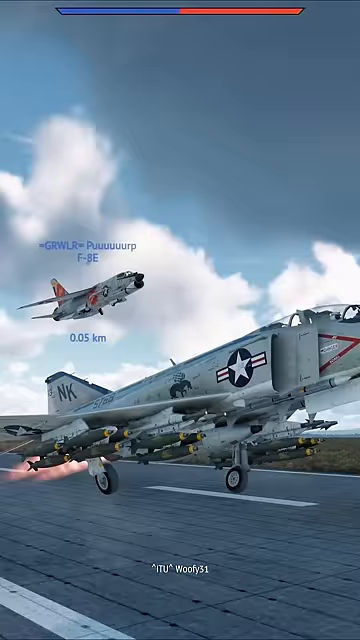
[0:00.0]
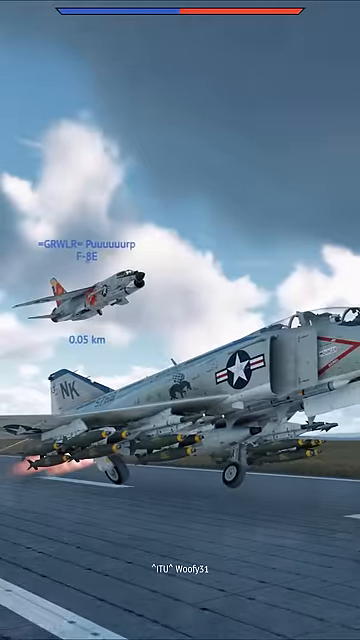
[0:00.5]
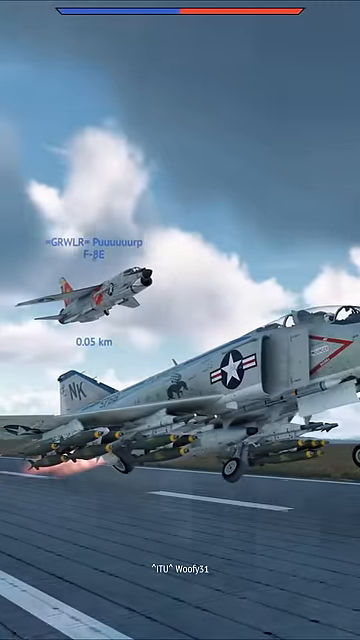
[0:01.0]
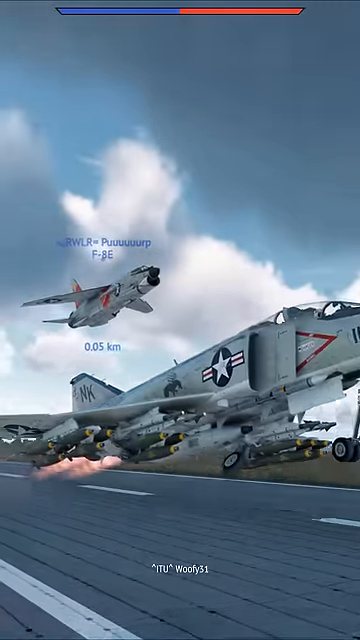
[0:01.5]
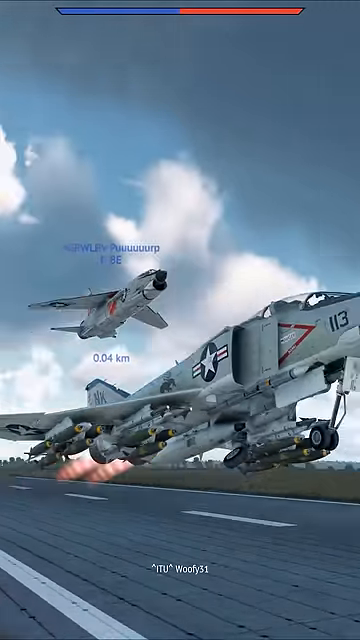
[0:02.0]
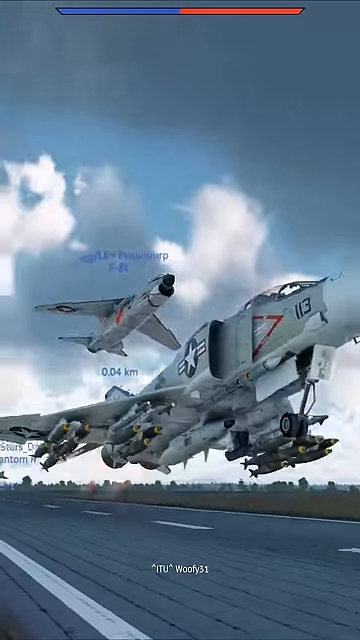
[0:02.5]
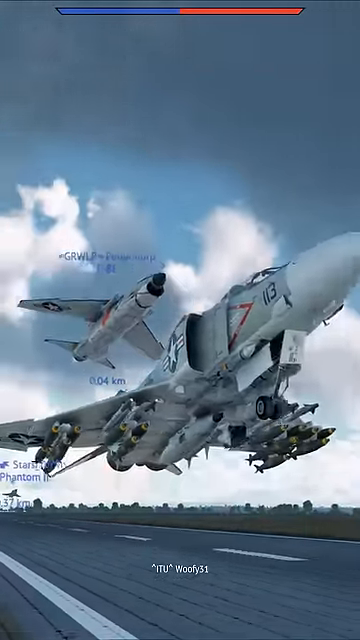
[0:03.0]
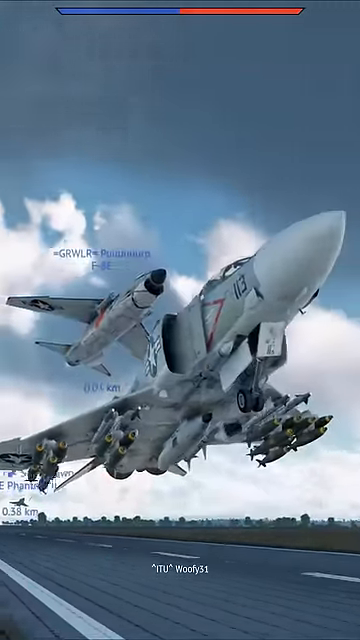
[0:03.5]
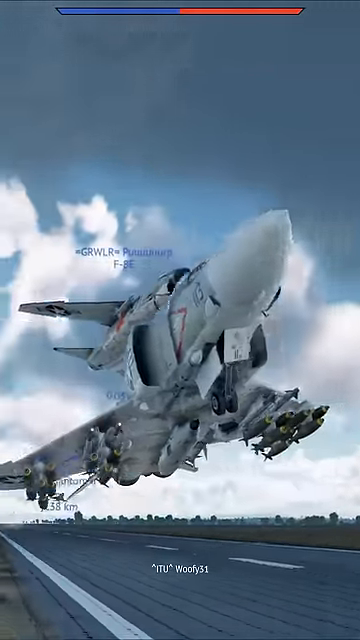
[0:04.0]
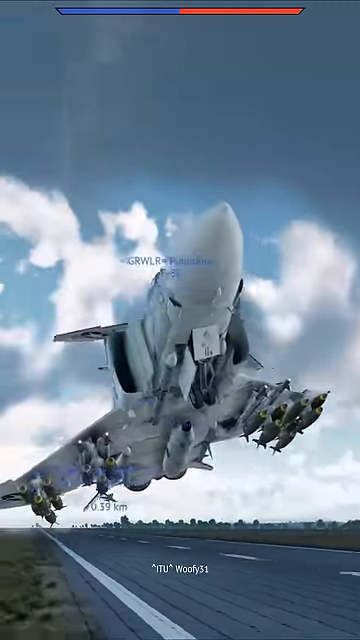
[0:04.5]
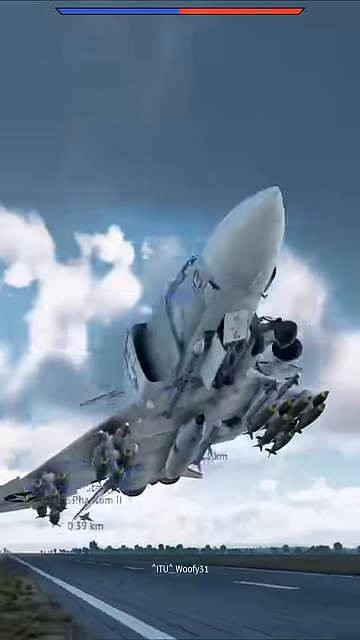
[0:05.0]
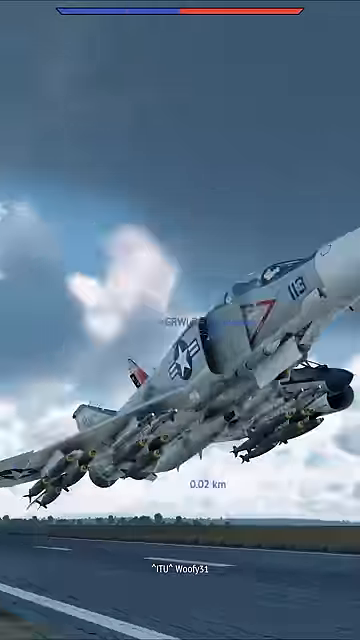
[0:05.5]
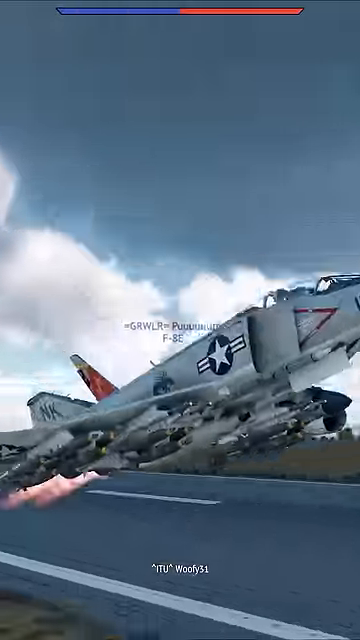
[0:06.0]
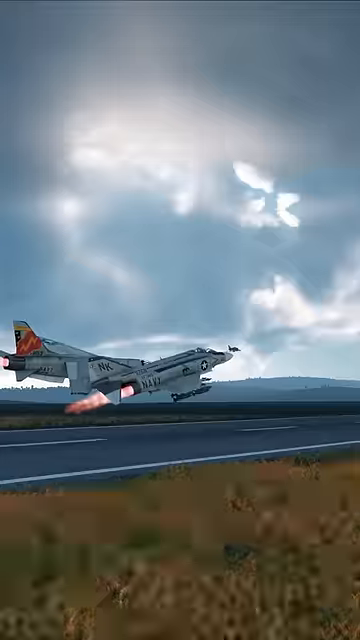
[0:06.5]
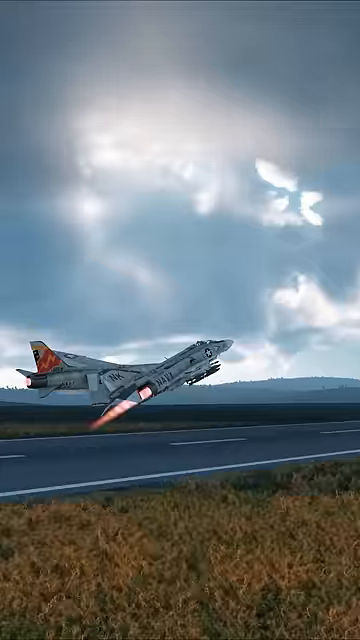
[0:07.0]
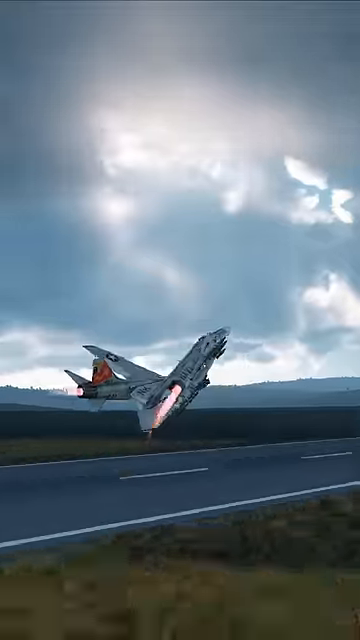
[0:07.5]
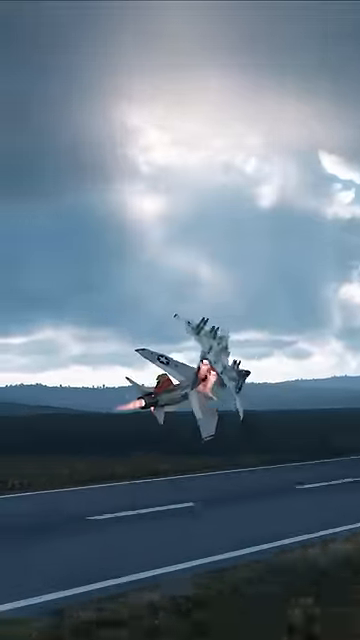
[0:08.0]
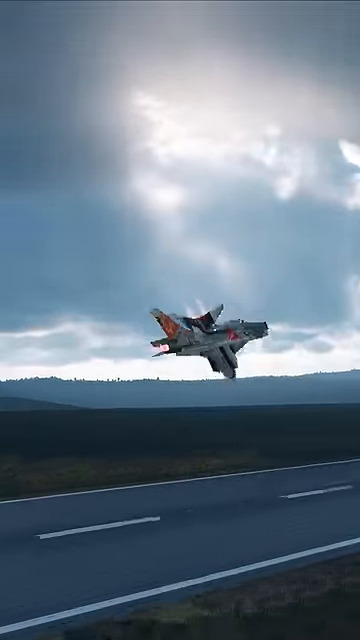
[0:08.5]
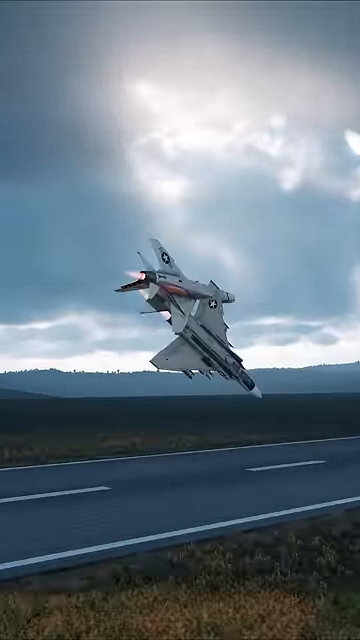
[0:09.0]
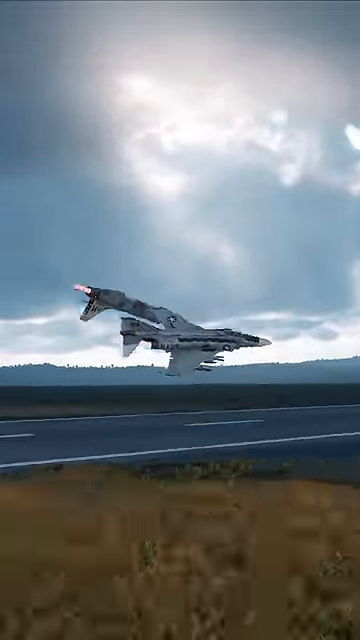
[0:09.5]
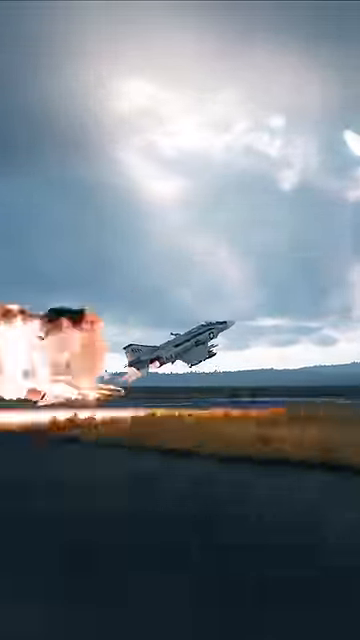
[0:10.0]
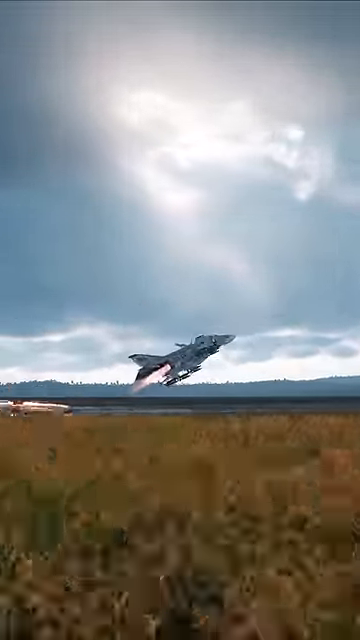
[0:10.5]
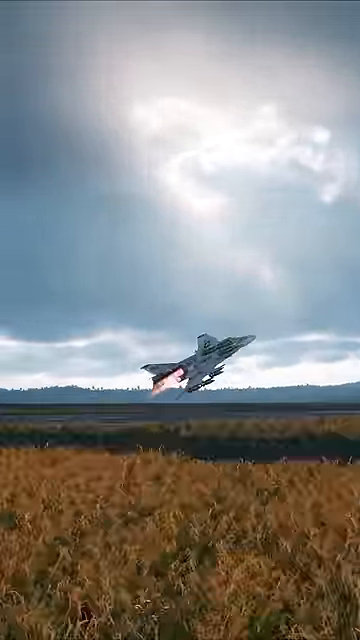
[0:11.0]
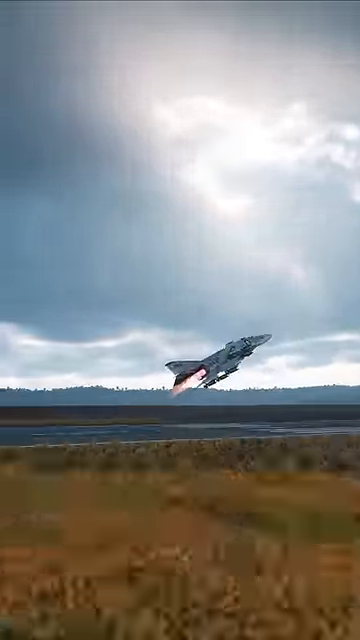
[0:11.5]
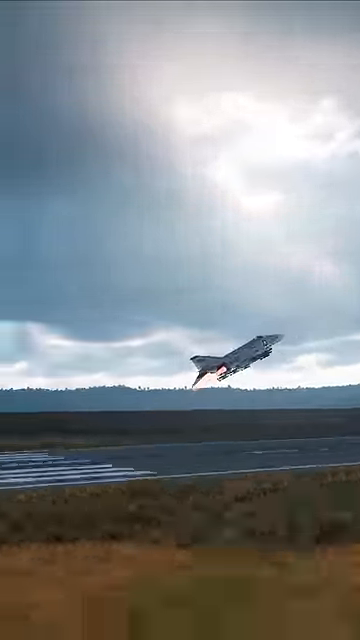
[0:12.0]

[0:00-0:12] Gameplay from a video game in which people fly fighter jets. At the very start, a fighter jet goes down a runway, and someone appears to be flying right behind it. There are two planes: one trying to take off and one already flying behind it. The planes look like 1980s Top Gun fighters, sort of chrome with what looks like a blue star on them. The plane flying behind has a word above it, possibly a player name. The trailing plane seems to try to stop the other plane from taking off, and they crash and blow up on the takeoff area. The graphics are low to medium, and the video is very low quality, all contained in a small bar in the center of the screen. Behind the planes there appears to be a sky, just blue with clouds.